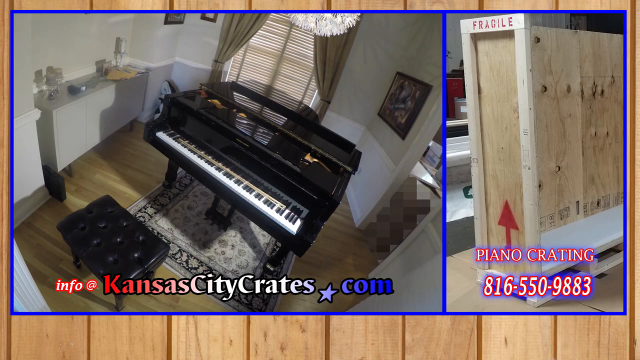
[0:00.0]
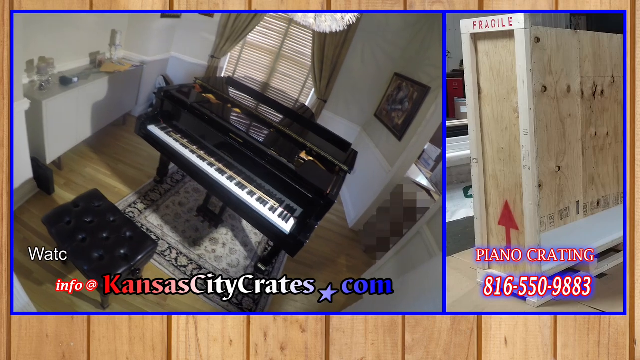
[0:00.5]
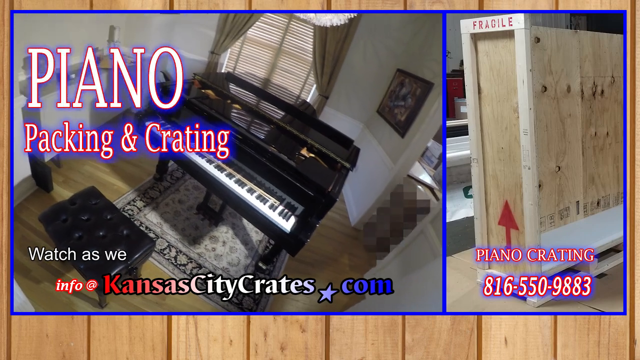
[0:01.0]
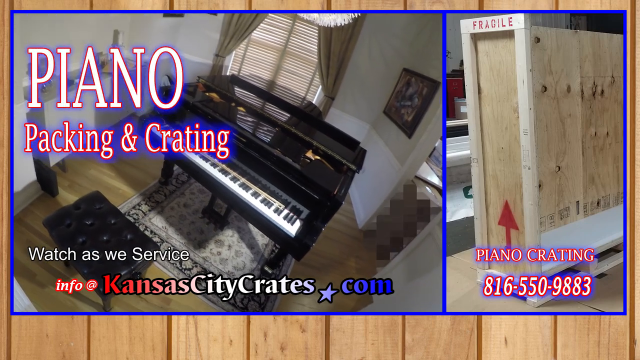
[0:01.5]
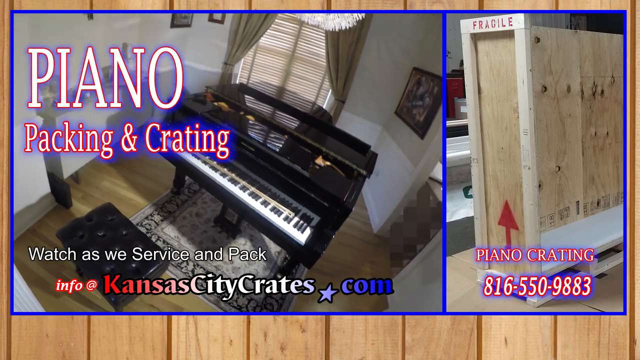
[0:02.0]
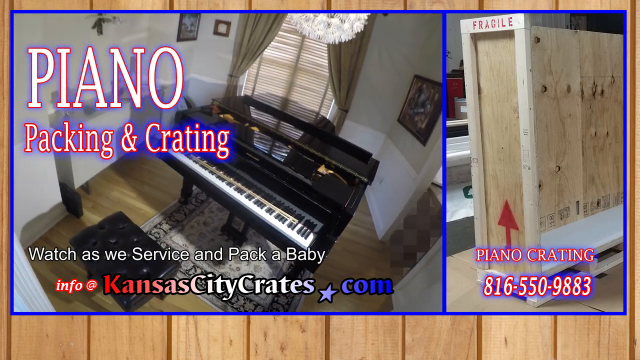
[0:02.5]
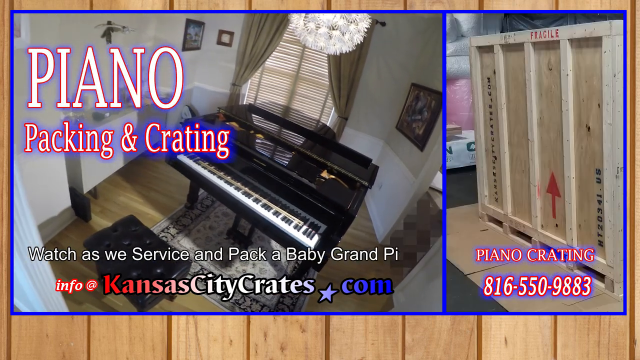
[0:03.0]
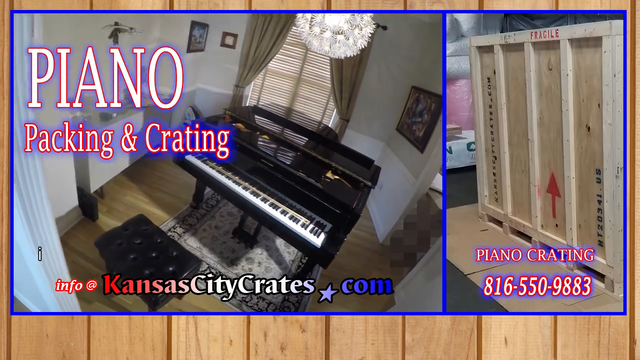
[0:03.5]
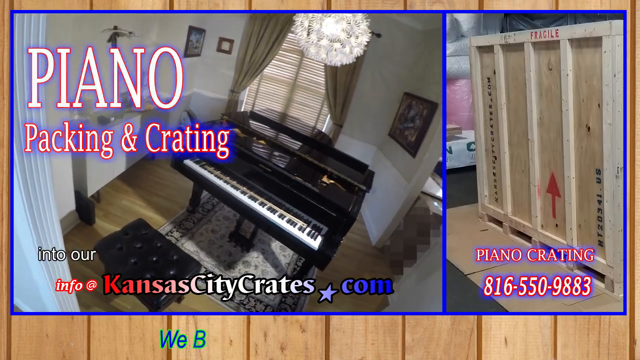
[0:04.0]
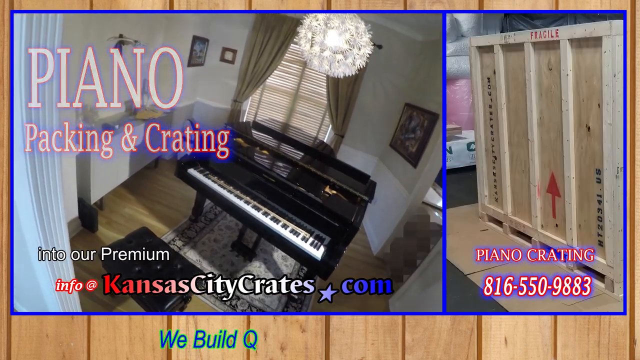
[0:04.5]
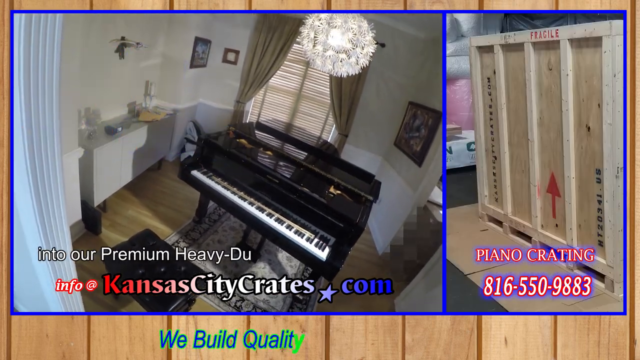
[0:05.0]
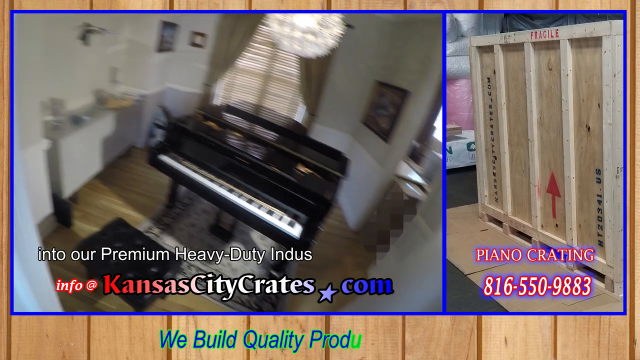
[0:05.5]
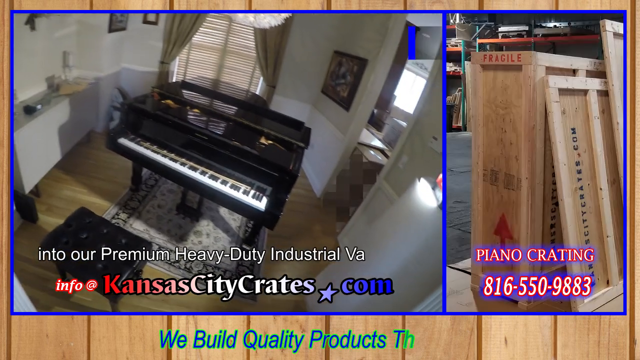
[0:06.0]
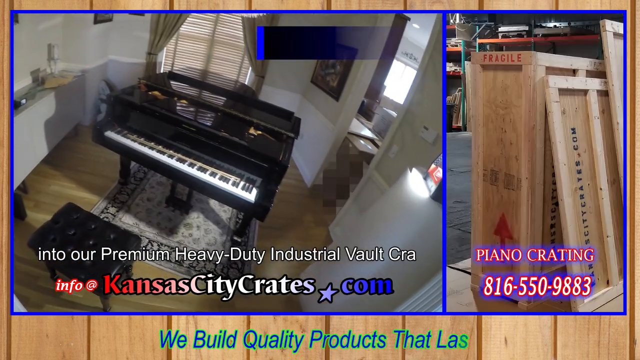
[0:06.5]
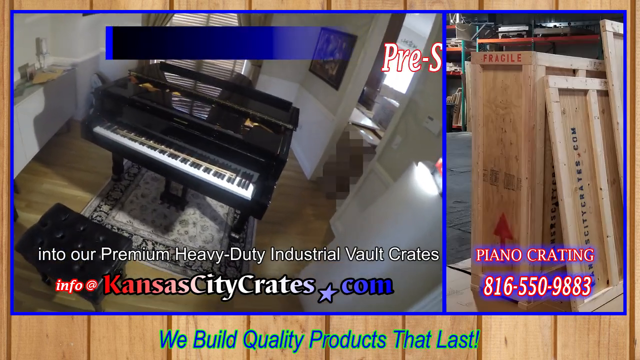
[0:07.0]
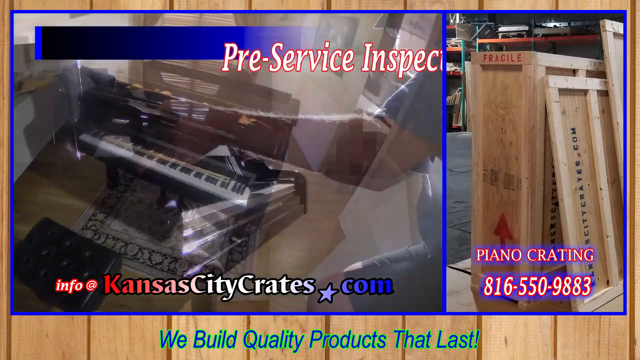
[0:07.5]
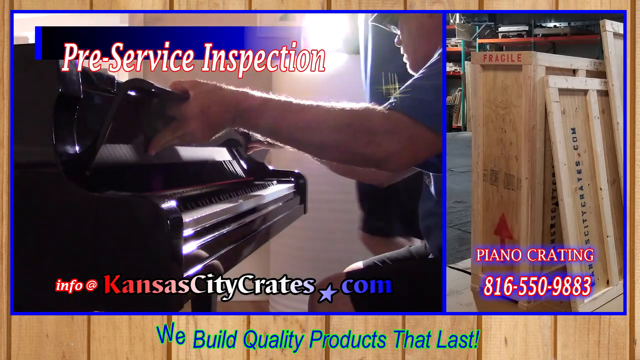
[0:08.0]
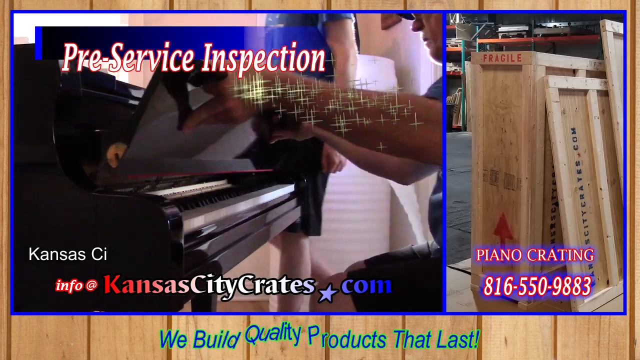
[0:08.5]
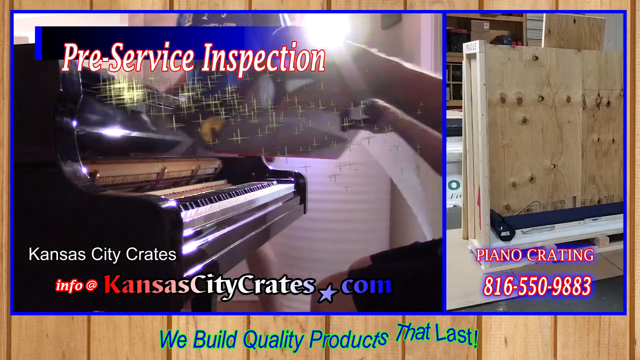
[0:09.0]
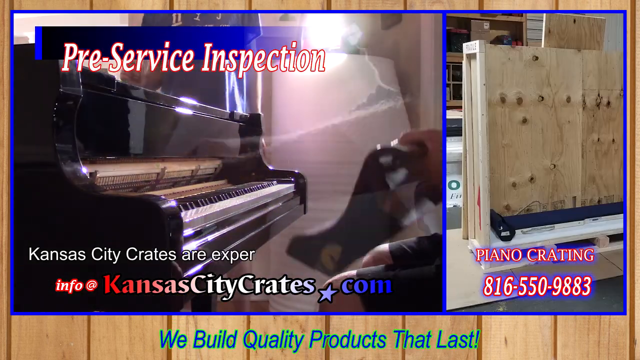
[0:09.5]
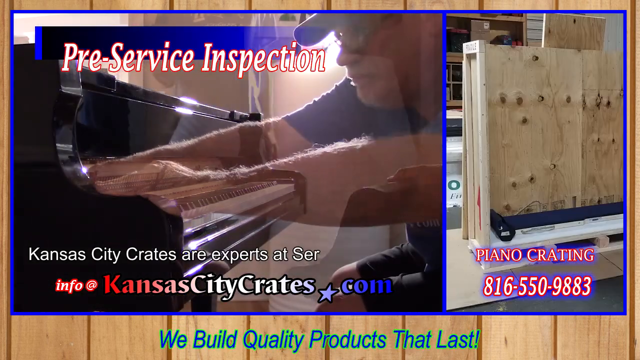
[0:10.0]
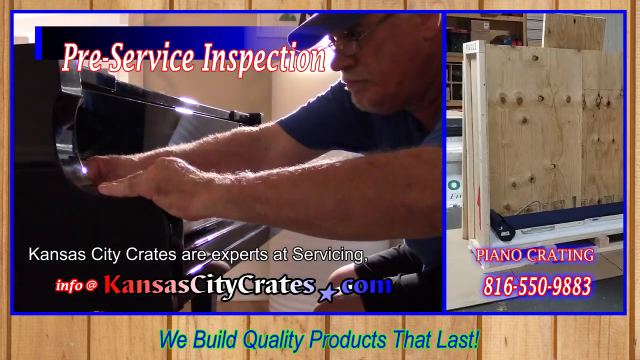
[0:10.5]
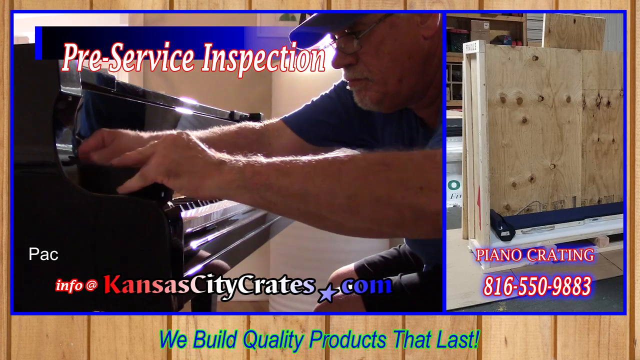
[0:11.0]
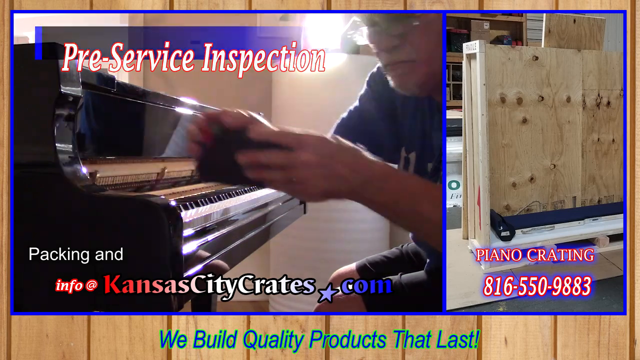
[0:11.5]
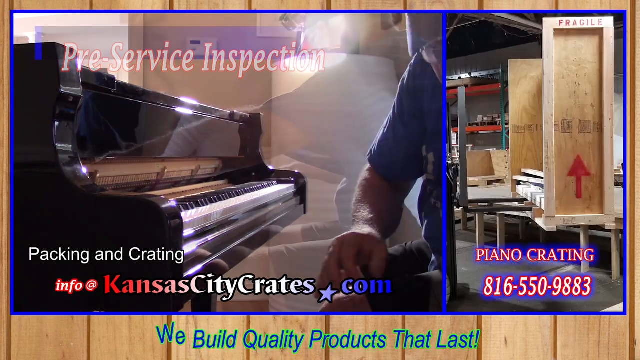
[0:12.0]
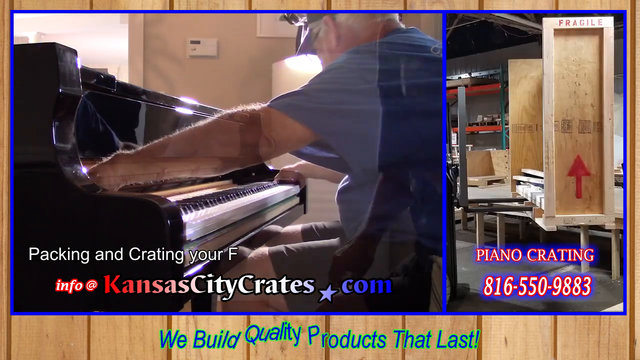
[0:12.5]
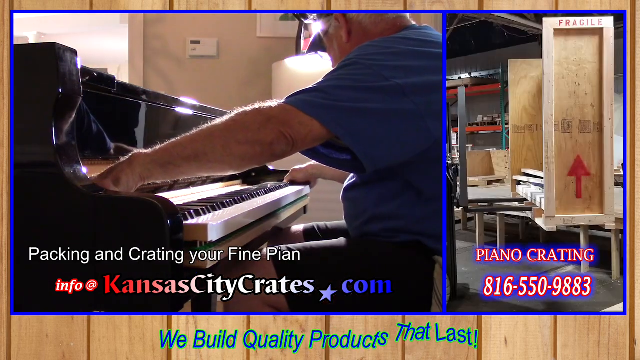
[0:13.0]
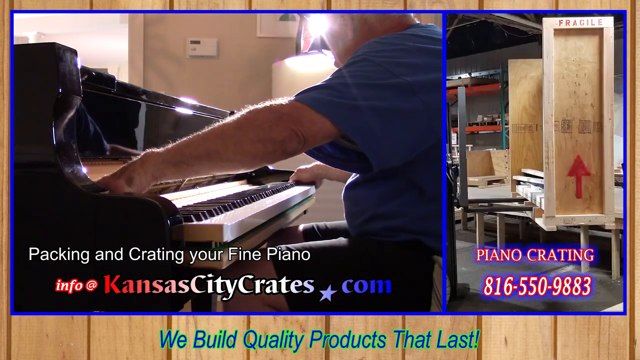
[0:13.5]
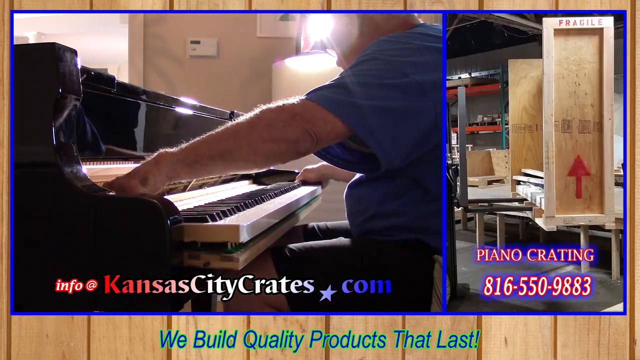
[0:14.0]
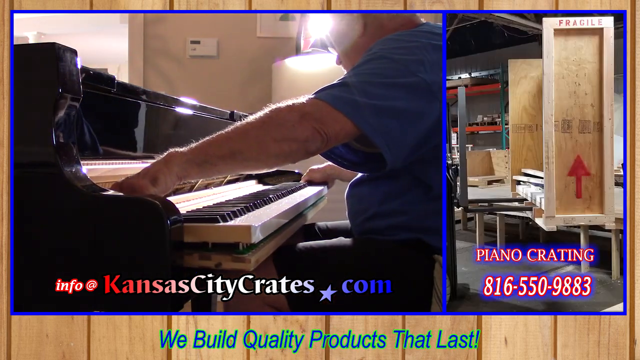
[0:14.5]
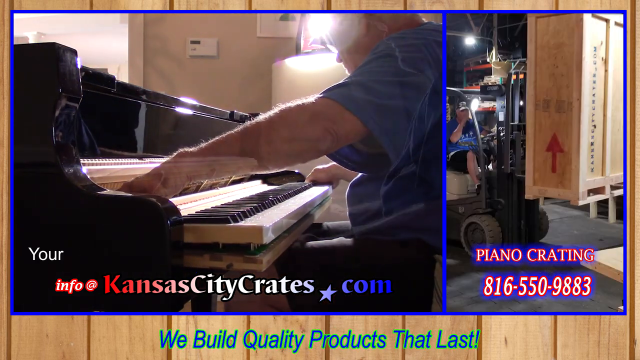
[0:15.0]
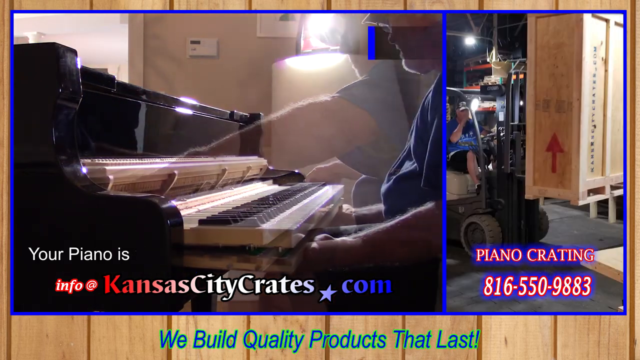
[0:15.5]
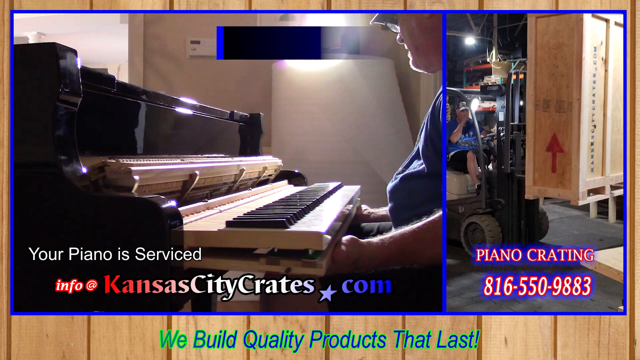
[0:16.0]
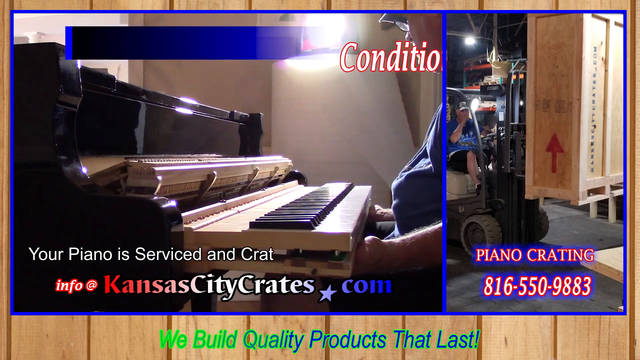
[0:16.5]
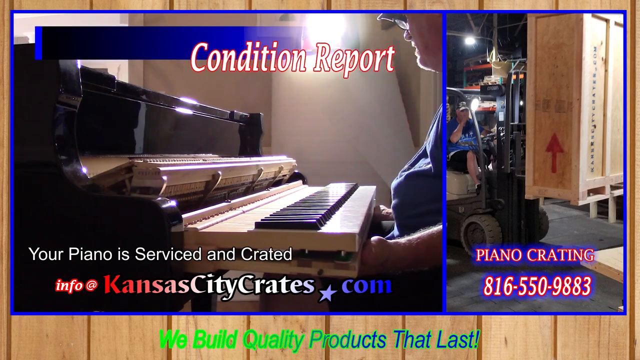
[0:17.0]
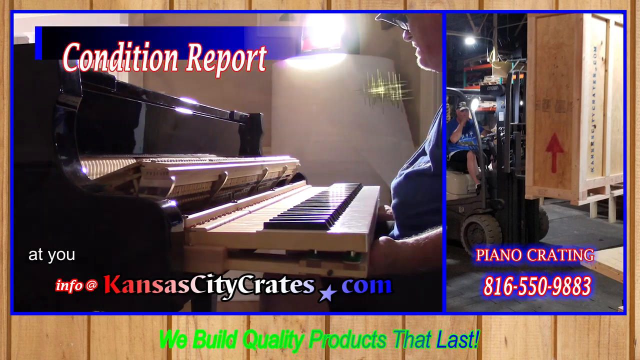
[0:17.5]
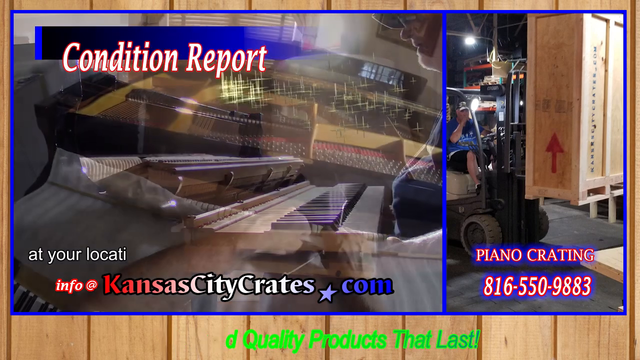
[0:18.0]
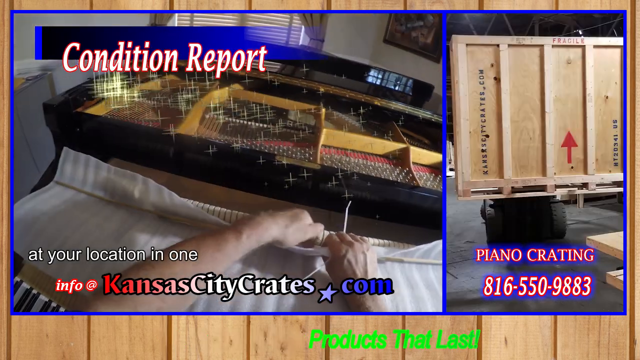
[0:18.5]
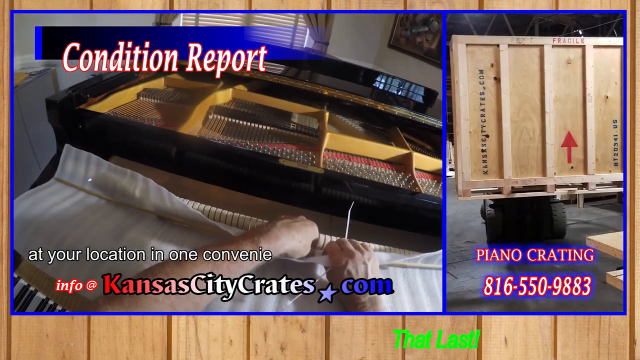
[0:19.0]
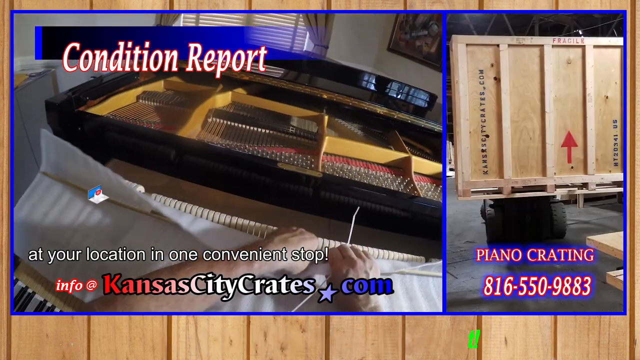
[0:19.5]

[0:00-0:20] The video opens on a black piano in a nice living room. The piano is on top of a rug, with beige curtains behind it. There appears to be a chandelier above the piano. In front of the piano is a leather tufted stool, and to its left is a console. Next, a man in a blue shirt appears, an older white man approximately 65 years old. He is sitting in front of a piano and taking it apart. There is a thermostat behind the piano and a light to the right of the man. On-screen text reads "the piano is serviced at your location in one convenient stop."